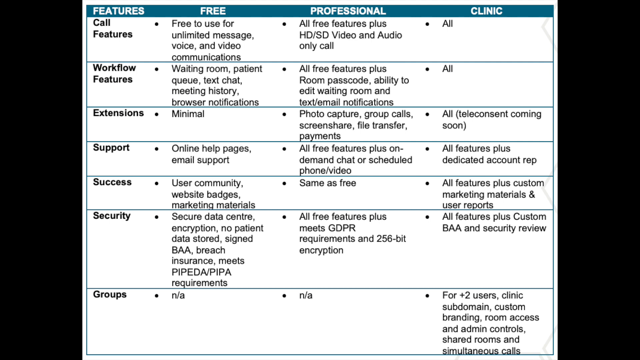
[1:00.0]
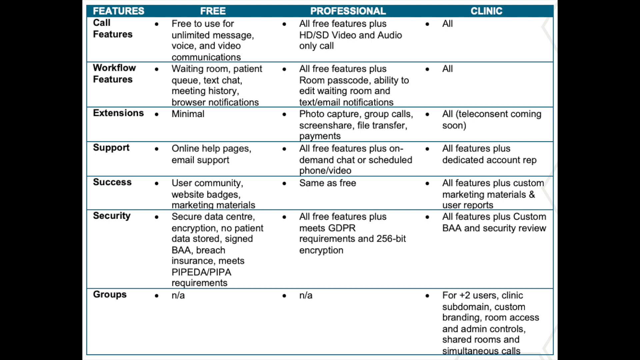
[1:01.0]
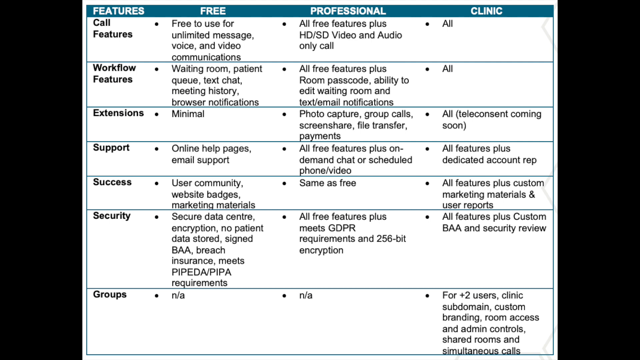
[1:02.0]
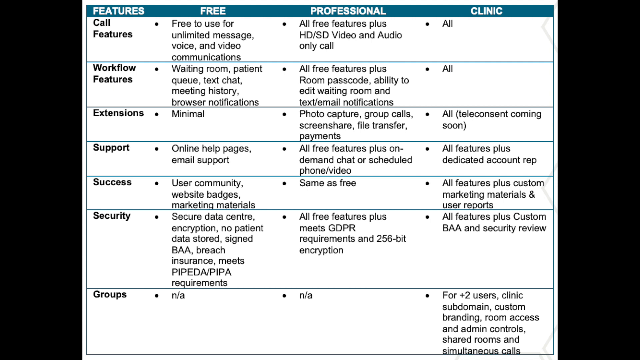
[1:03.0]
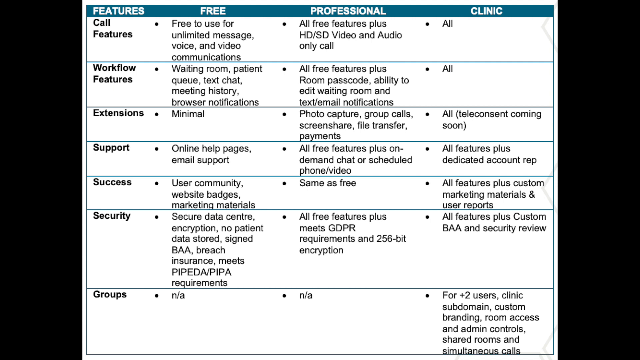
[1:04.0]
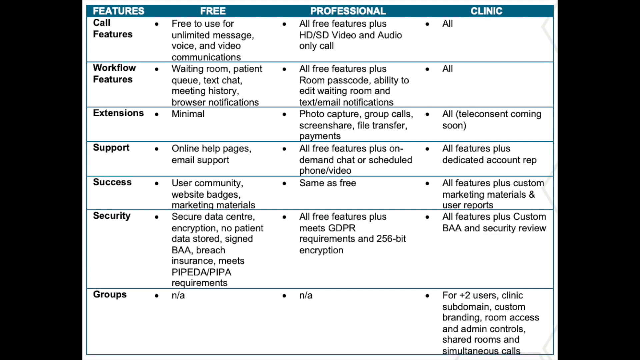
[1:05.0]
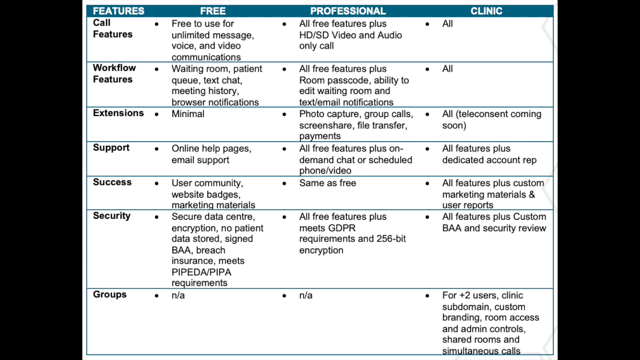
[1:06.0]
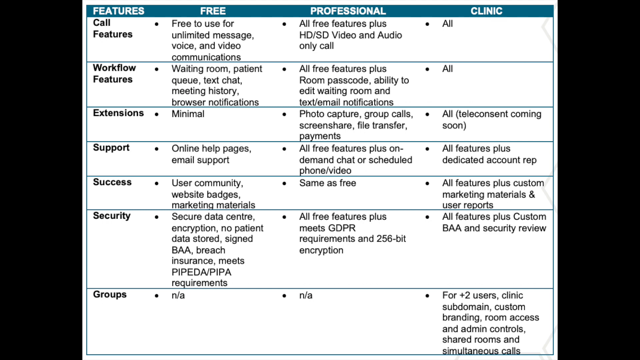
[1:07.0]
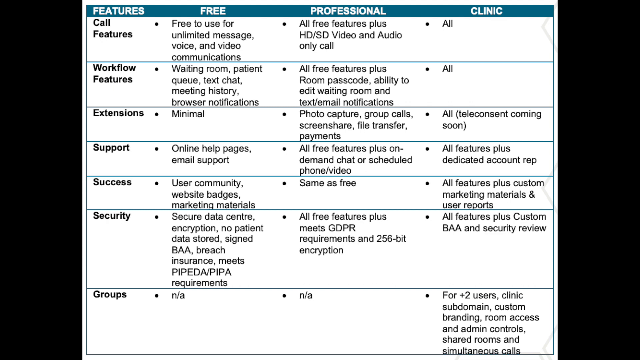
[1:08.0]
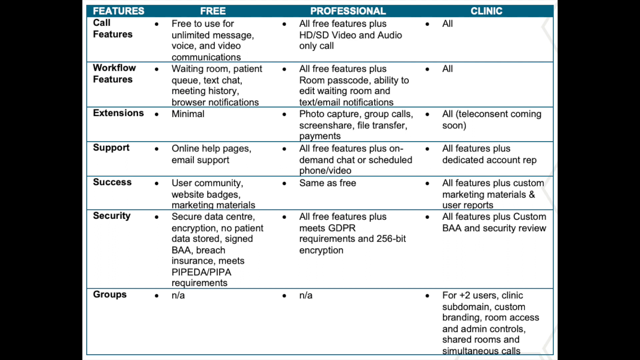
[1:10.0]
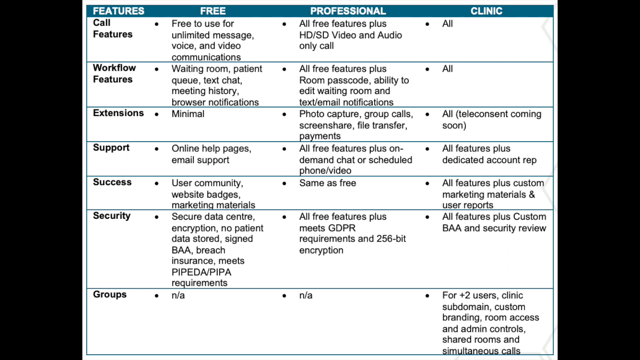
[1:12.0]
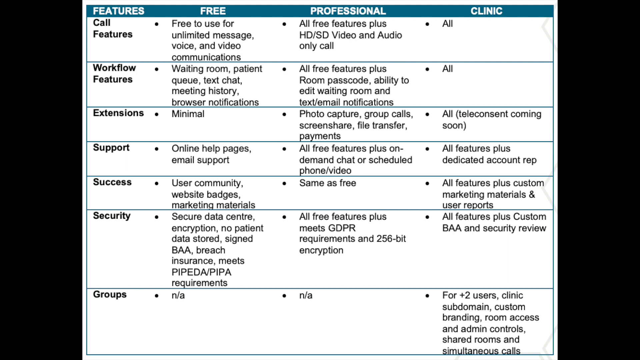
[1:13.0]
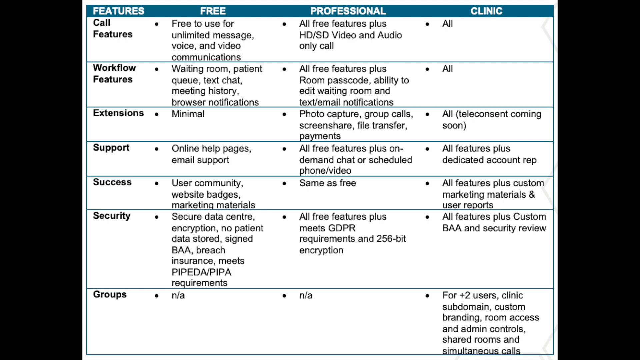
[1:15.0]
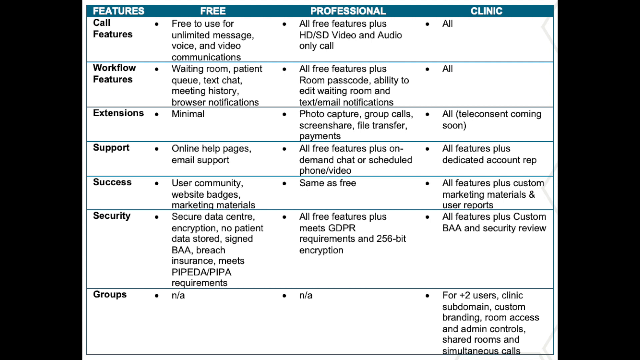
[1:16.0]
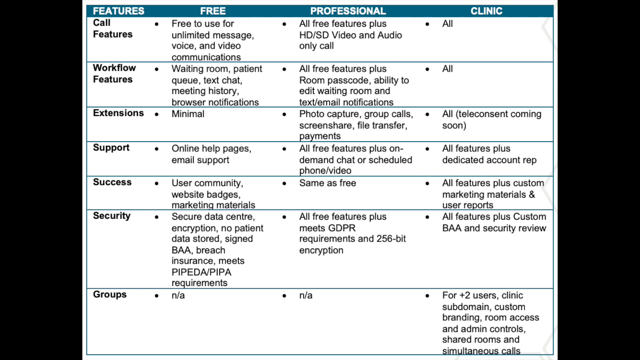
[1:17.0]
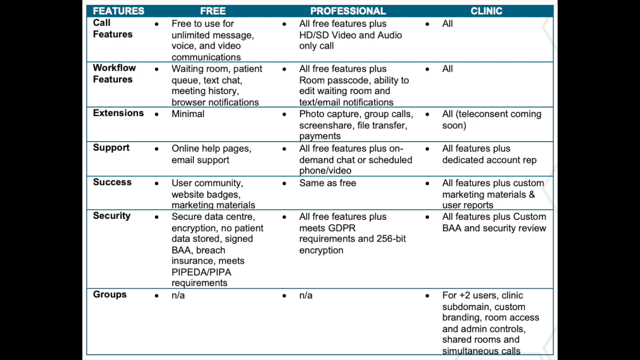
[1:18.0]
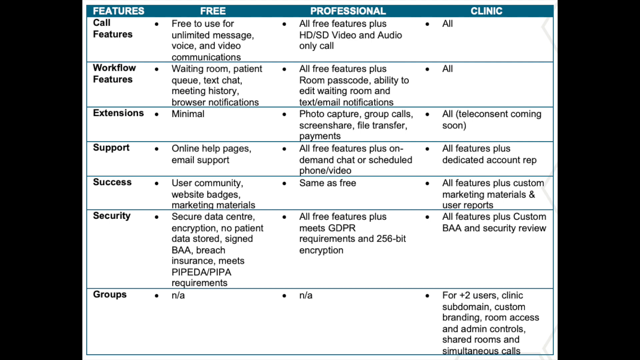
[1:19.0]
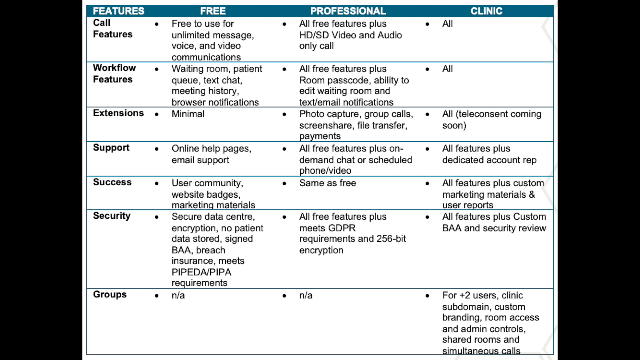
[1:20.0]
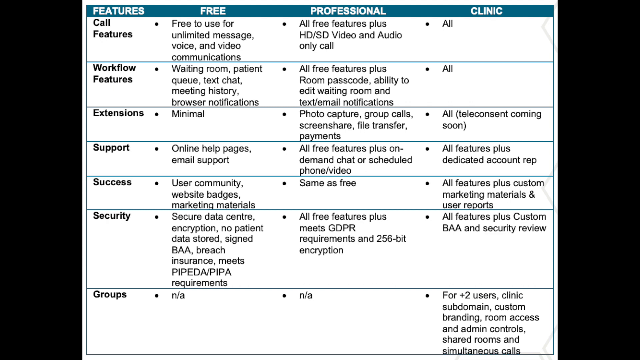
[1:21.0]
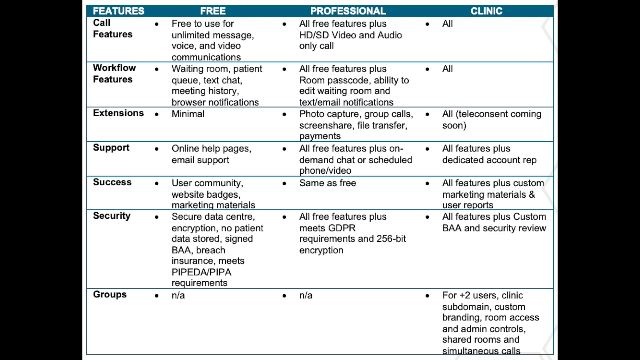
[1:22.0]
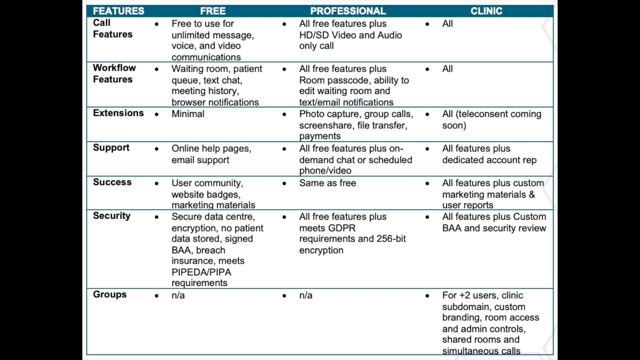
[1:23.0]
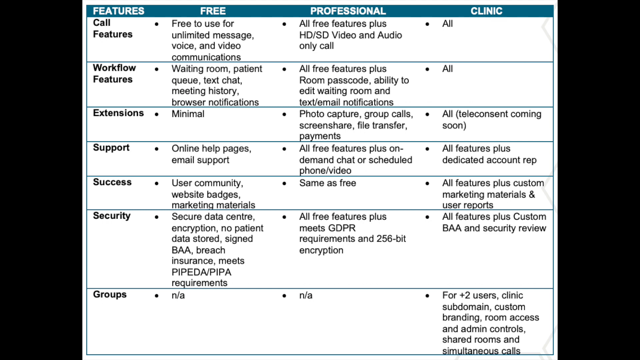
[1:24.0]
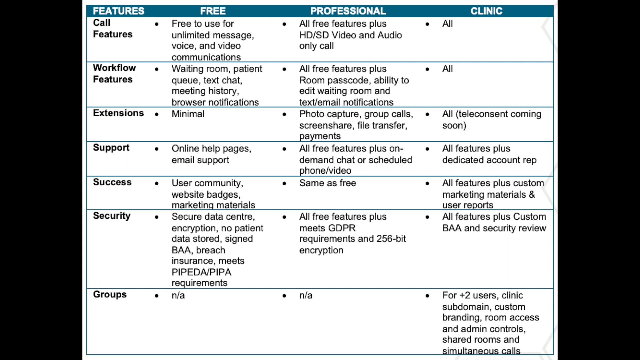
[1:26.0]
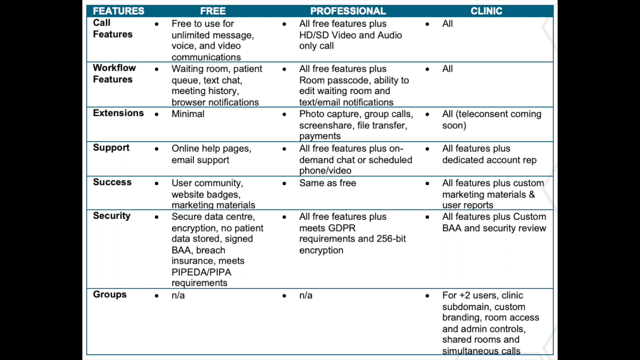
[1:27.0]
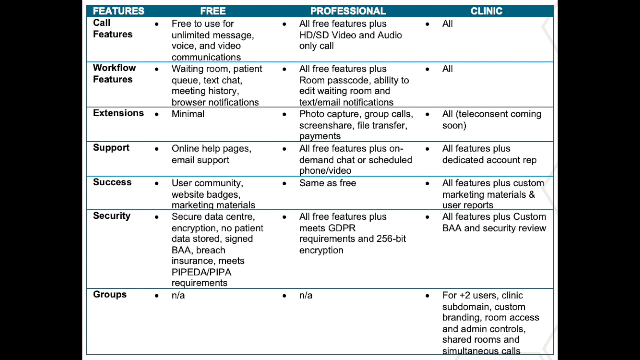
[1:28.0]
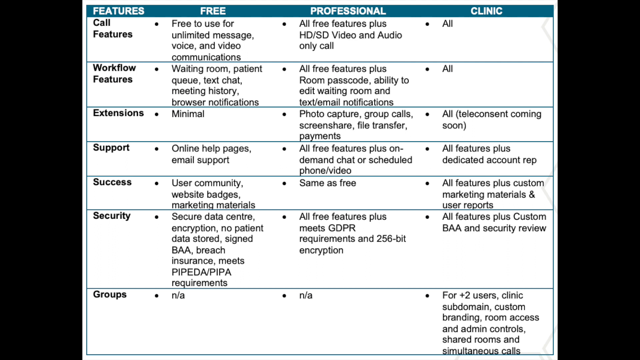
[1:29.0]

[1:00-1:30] A page of the doxy.me website shows the features of the free, professional, and clinic membership levels. It includes a groups section, marked not applicable under free and under professional; under clinic it lists two users, clinic subdomain, custom branding, room access and administrative controls, and shared room and simultaneous calls. The membership choices are divided into areas: call features, workflow features, extensions, support, success, security, and groups, each with bullet points that differentiate one choice from another. Clinic is the highest and most expensive level, professional is in the middle, and there is also a free option.